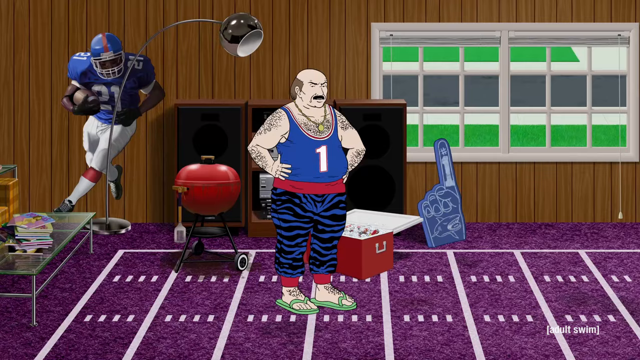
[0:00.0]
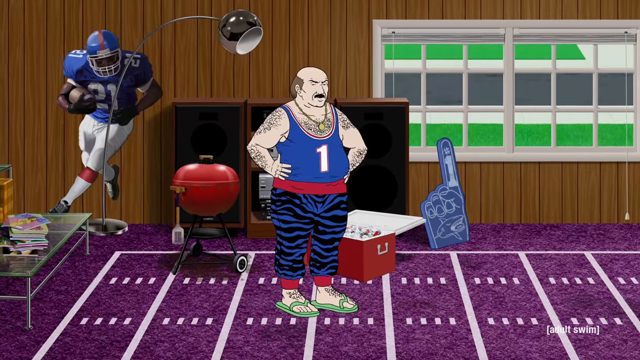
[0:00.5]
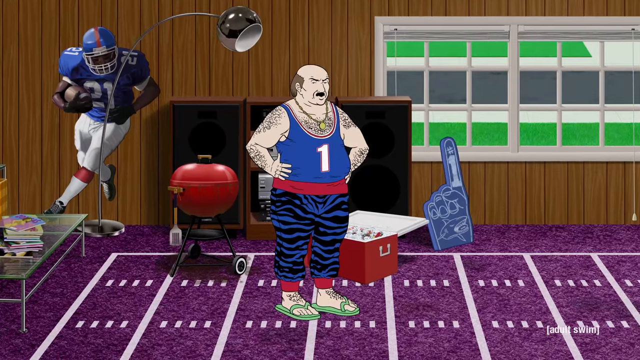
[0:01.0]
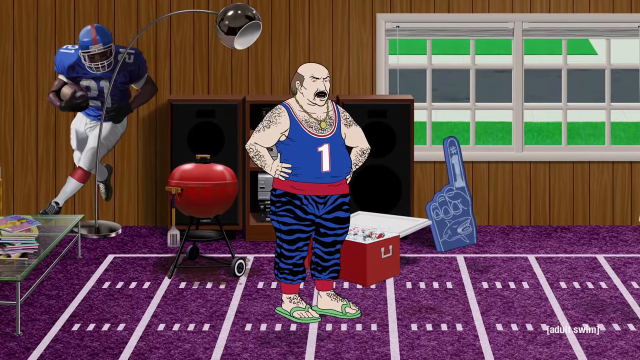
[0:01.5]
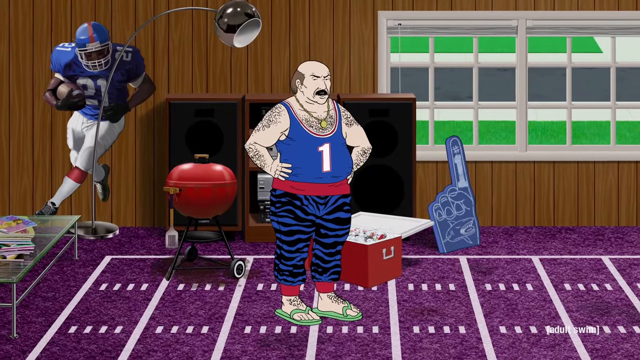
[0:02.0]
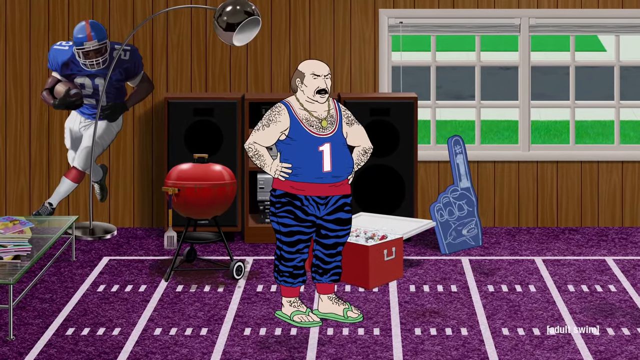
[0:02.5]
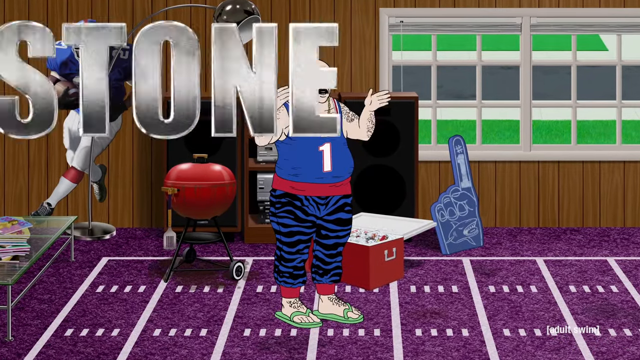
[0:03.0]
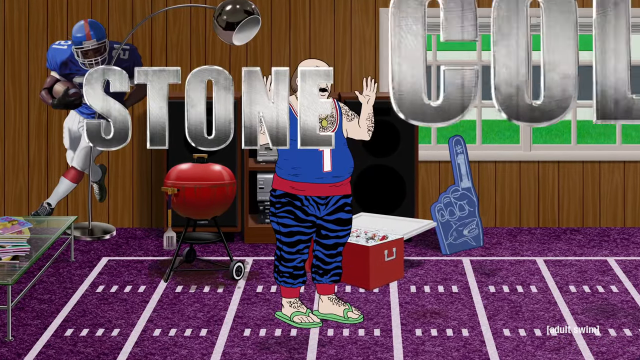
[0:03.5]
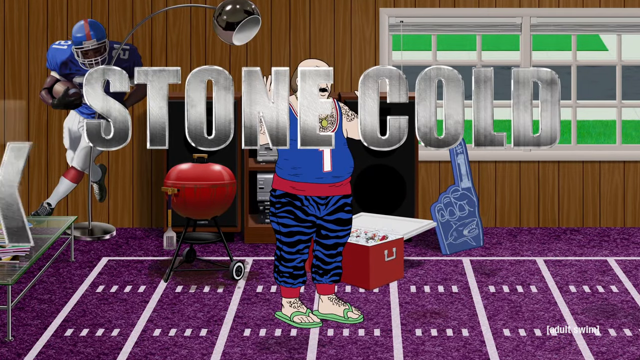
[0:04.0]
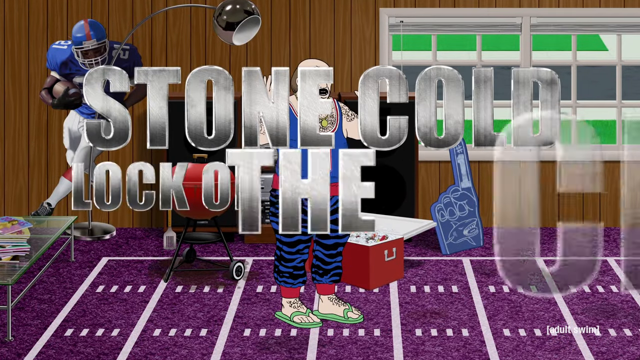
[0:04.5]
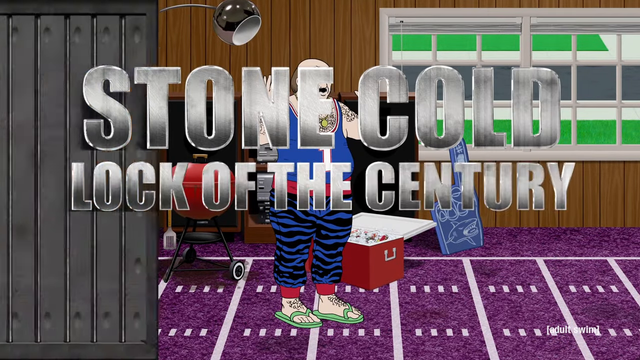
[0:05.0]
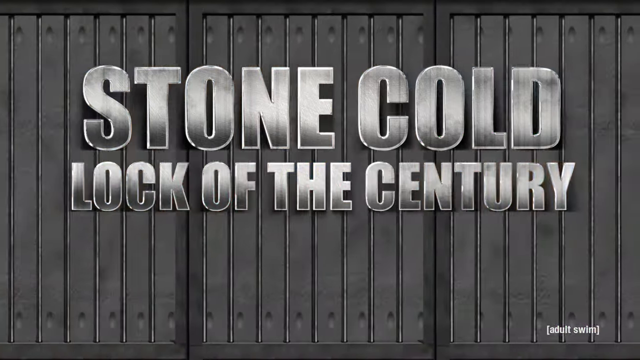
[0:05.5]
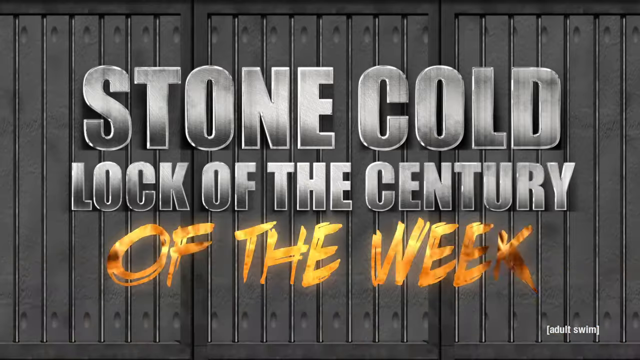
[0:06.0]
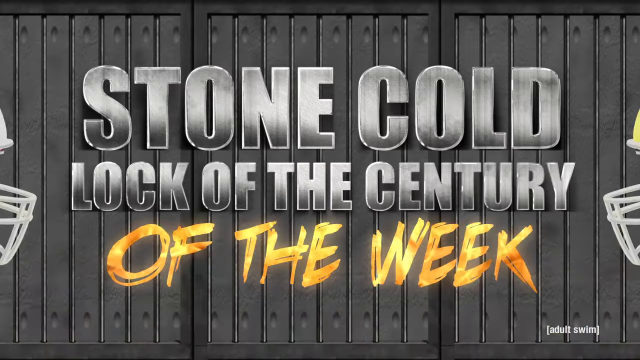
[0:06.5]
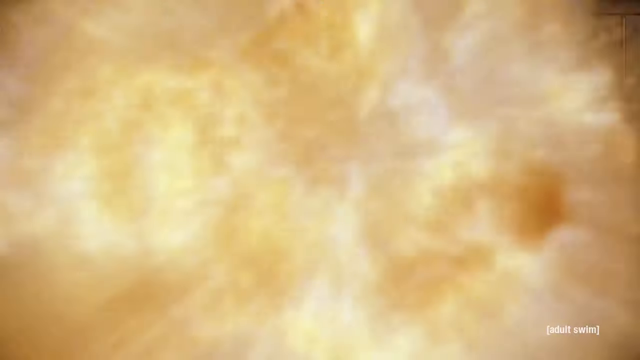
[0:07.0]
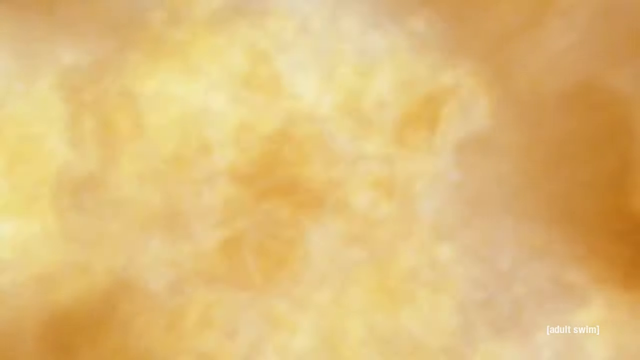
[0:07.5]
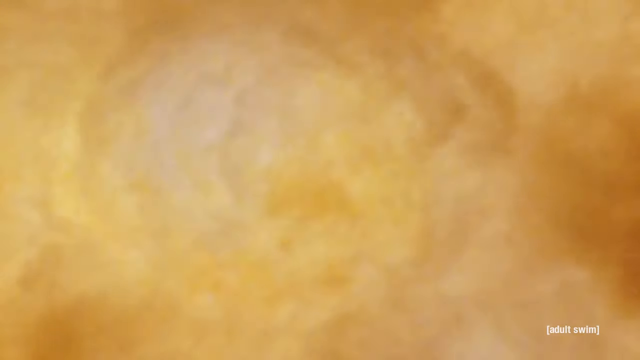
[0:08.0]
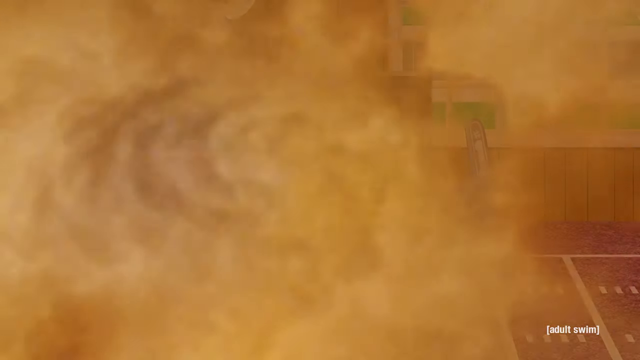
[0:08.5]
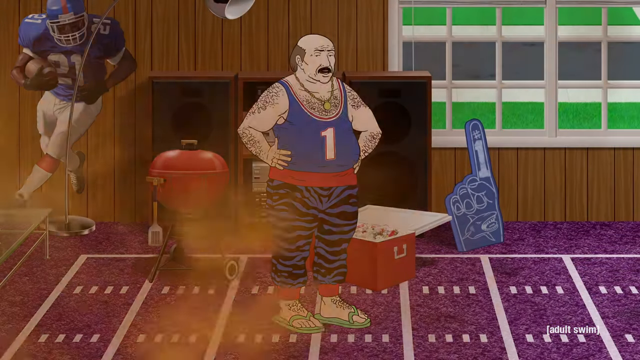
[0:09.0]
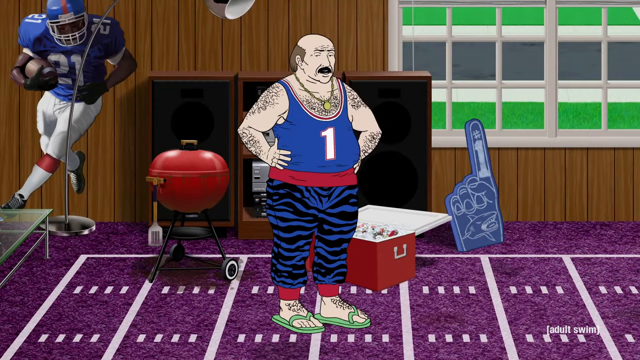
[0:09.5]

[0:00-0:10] An animated drawing shows a man standing in a living room whose carpet is designed to look like a football field. In the background, a window is designed to look like it looks out at bleachers. Inside the room are his cooler of beer and grills, and a full-size cutout of a number 21 football player is on the wall. The man wears a number one jersey and workout pants and looks a little out of shape and overweight.